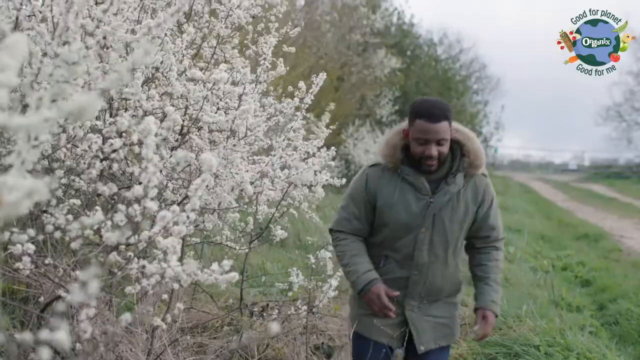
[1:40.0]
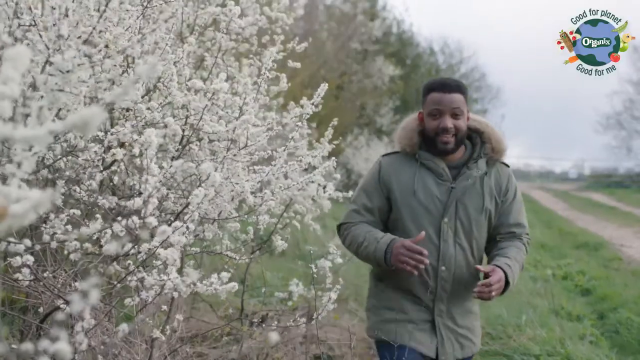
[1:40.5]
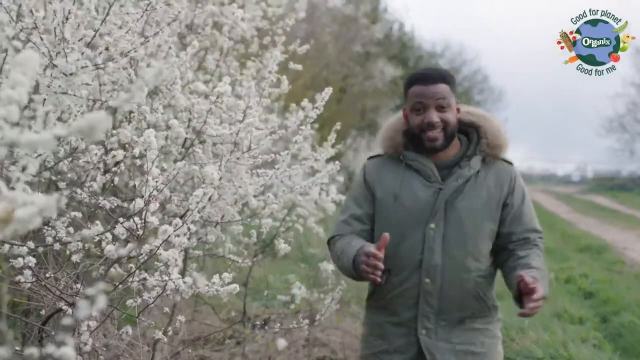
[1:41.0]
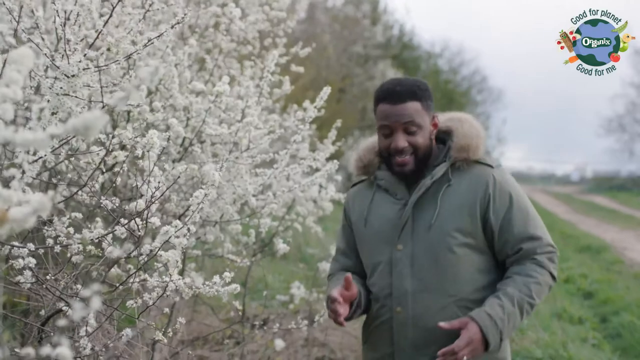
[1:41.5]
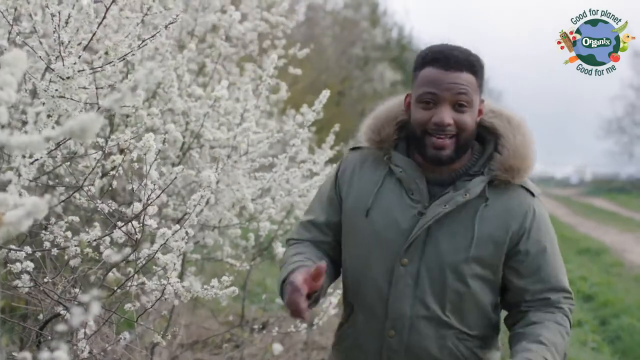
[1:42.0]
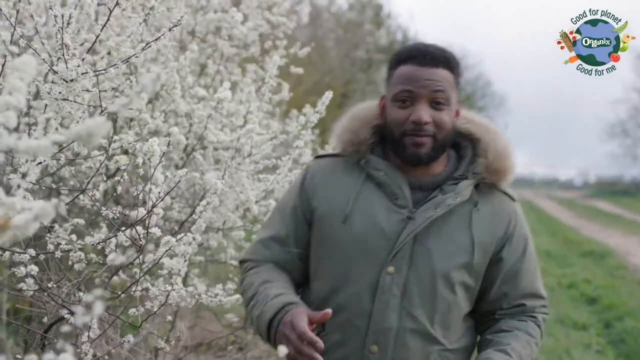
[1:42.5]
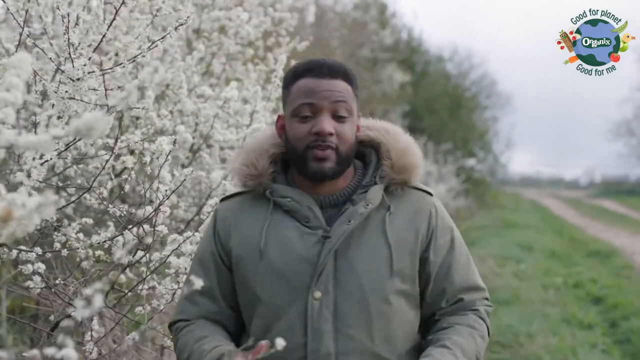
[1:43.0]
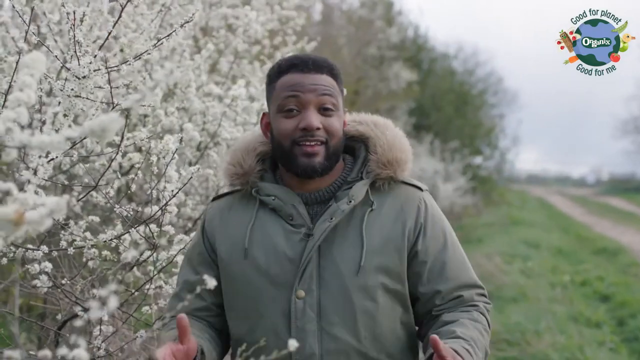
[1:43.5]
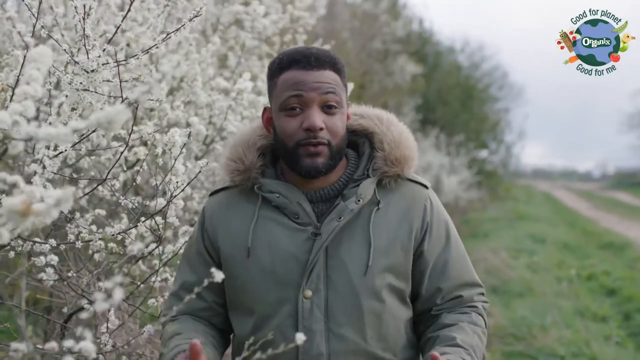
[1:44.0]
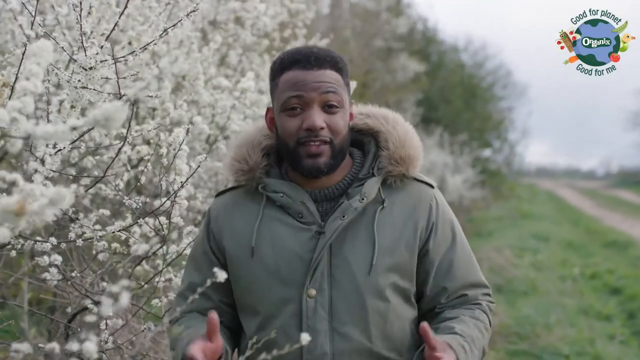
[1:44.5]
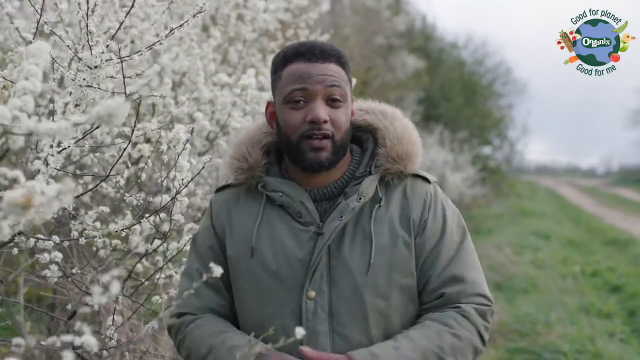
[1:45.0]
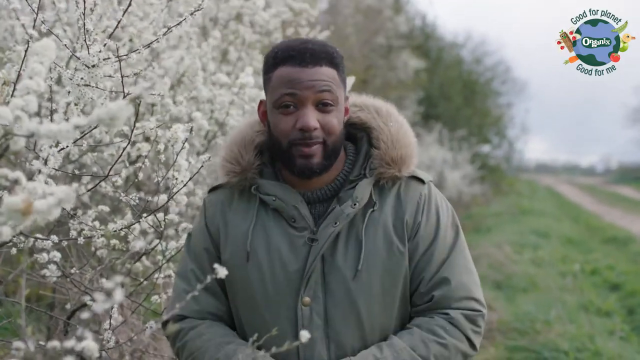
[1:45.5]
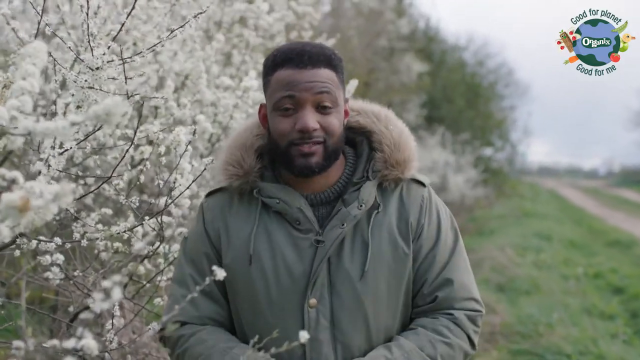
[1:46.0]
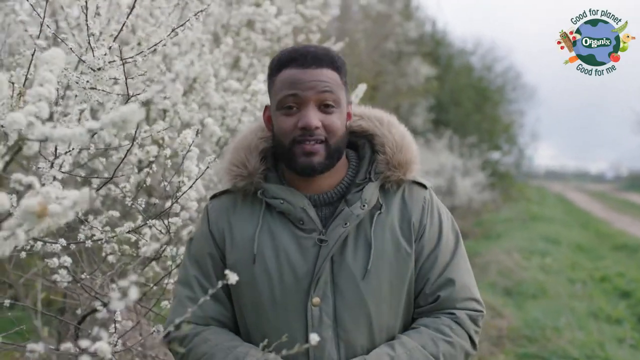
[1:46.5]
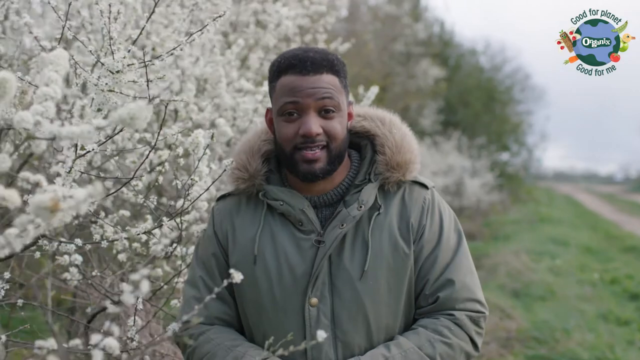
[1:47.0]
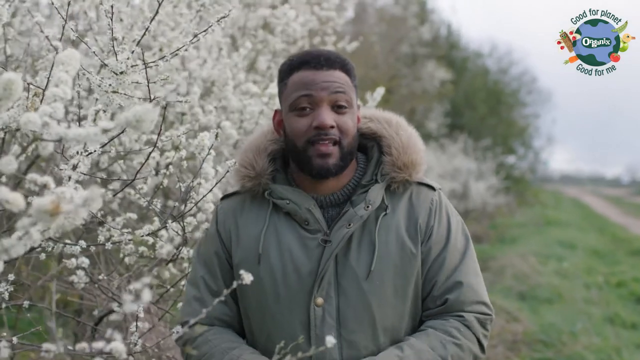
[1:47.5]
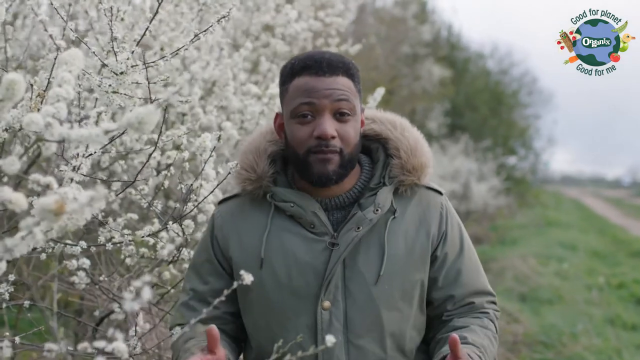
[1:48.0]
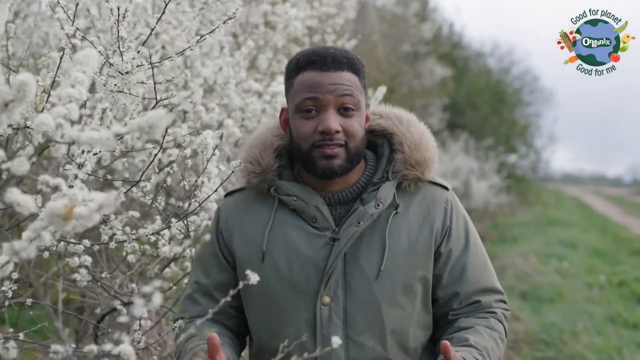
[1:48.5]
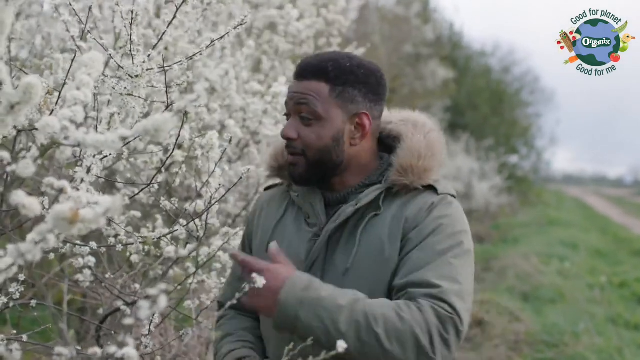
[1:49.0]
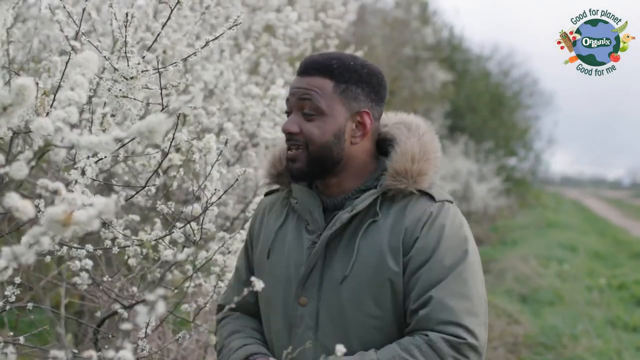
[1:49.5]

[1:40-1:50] The video has a really colourful setting. A banner in the top left says "good for the planet good for me". A picture of the earth has the word "organics" in the middle of it, and the rest is a blue sky with a lot of fruit that appears to be in the shape of a rainbow. The heading says "on the farm with JB". JB appears wearing a fluffy jacket, with a lot of hay visible in the background. Three men show their farming methods and different plants they have grown, and in one scene JB shows his vegetables and how fresh they are.